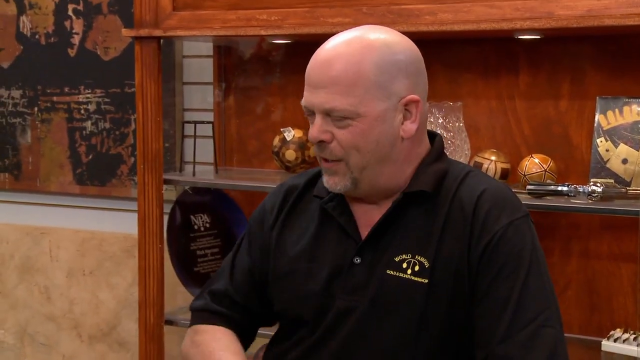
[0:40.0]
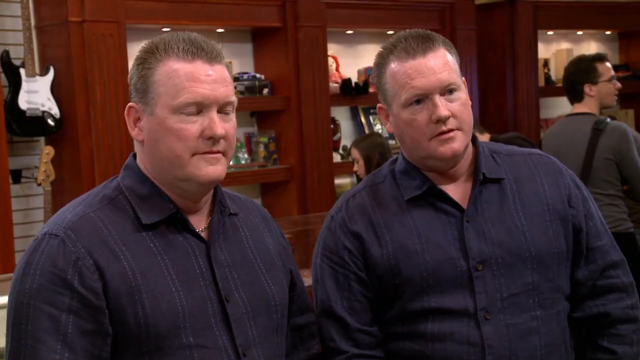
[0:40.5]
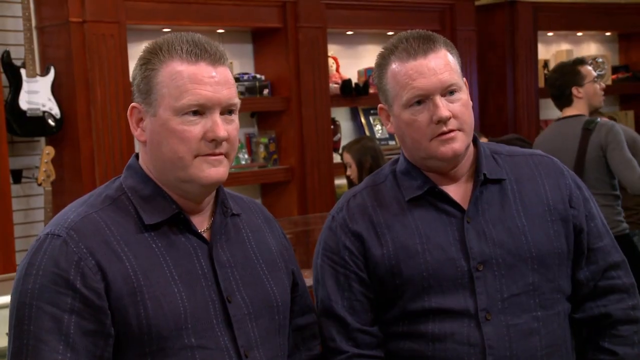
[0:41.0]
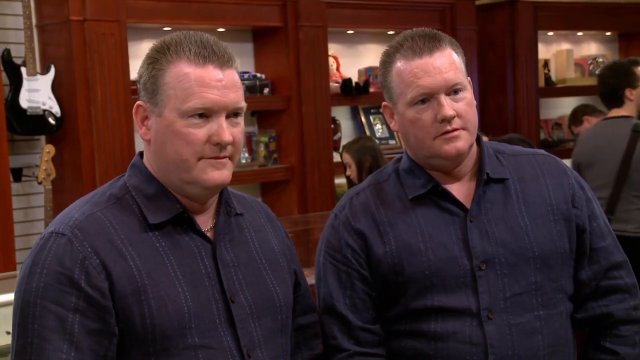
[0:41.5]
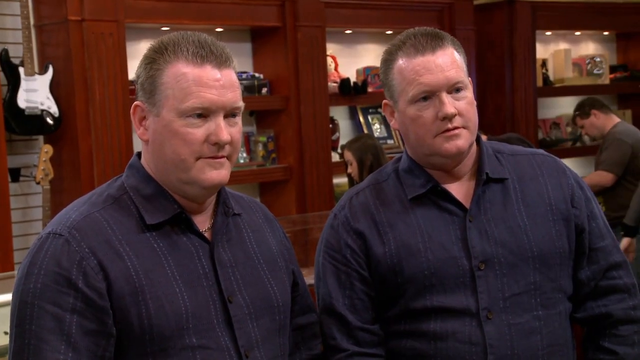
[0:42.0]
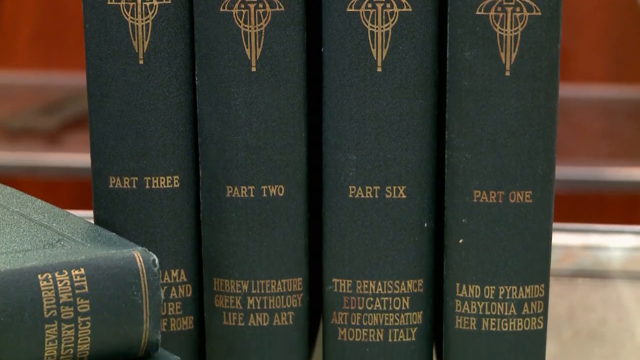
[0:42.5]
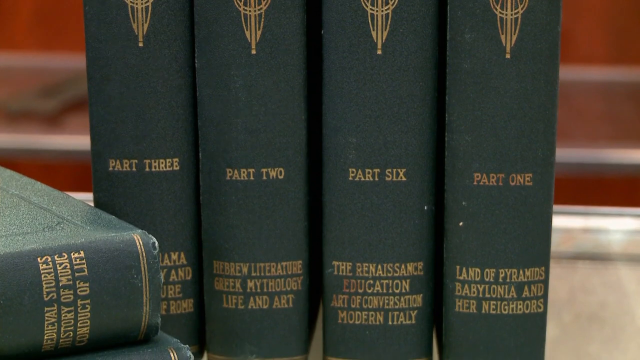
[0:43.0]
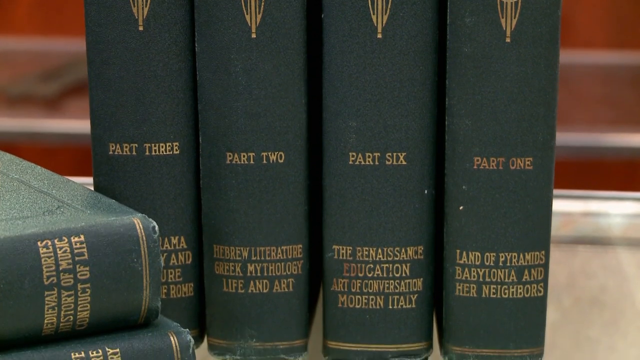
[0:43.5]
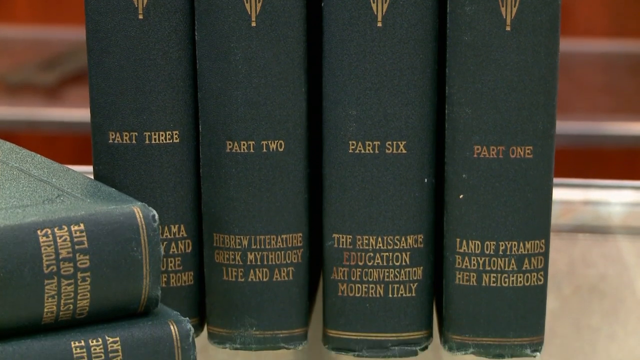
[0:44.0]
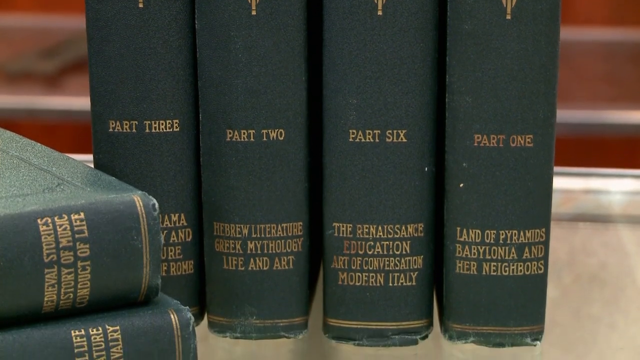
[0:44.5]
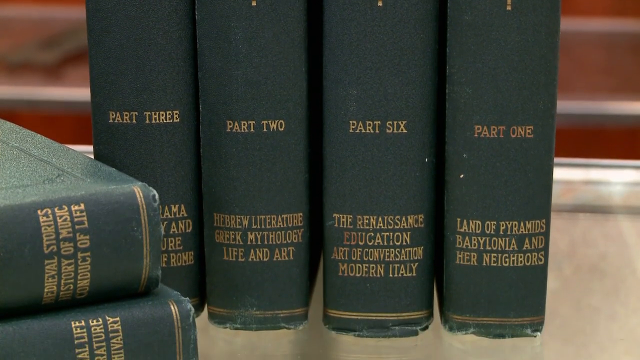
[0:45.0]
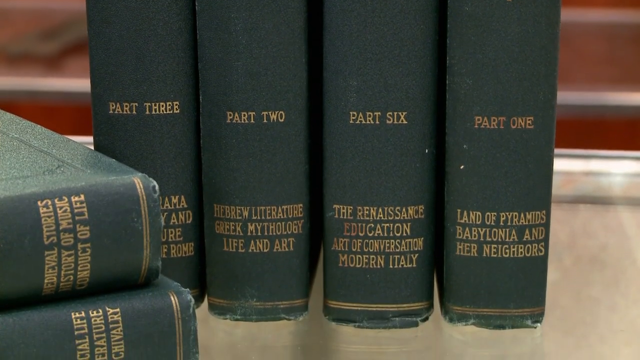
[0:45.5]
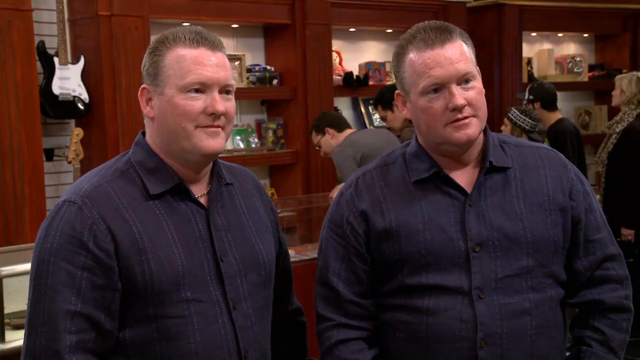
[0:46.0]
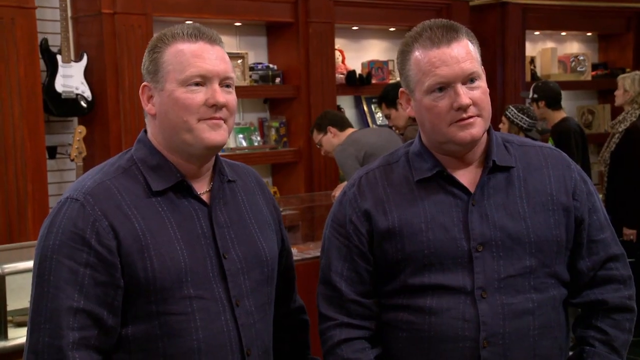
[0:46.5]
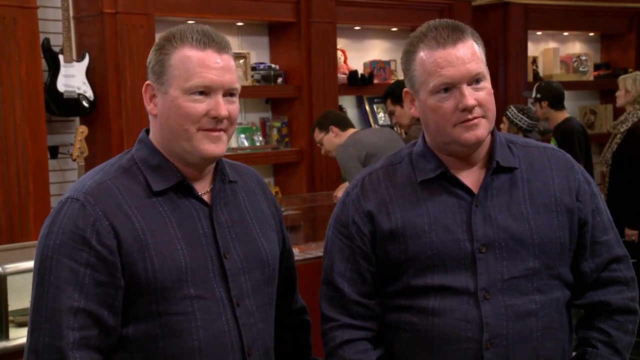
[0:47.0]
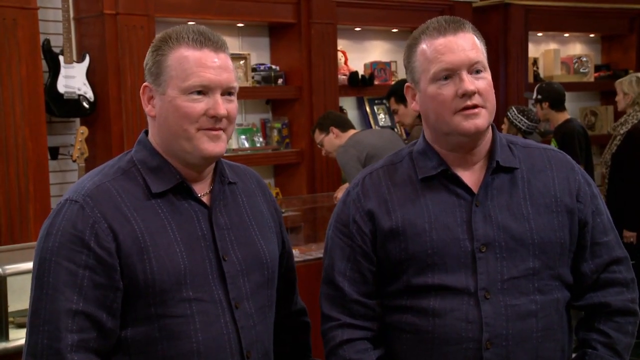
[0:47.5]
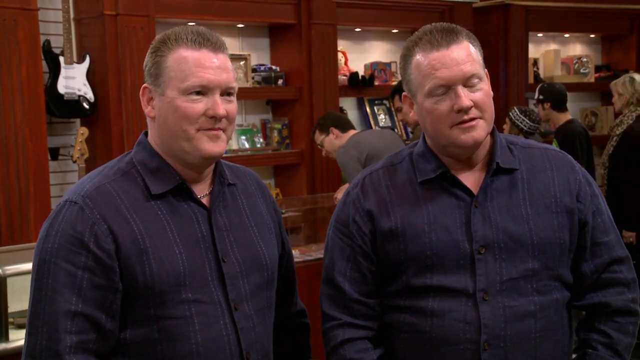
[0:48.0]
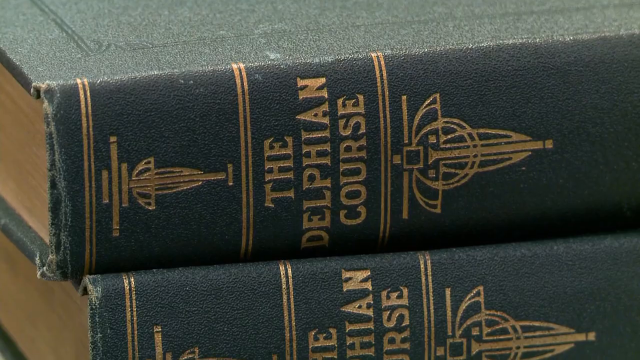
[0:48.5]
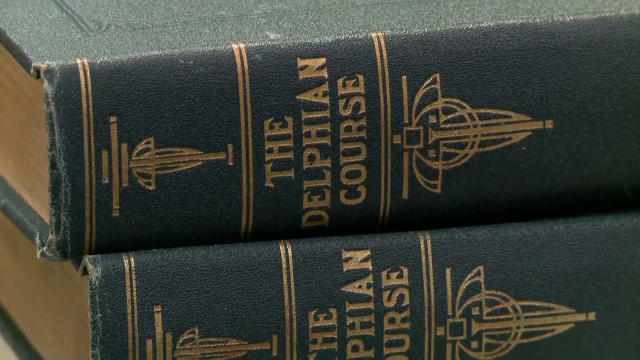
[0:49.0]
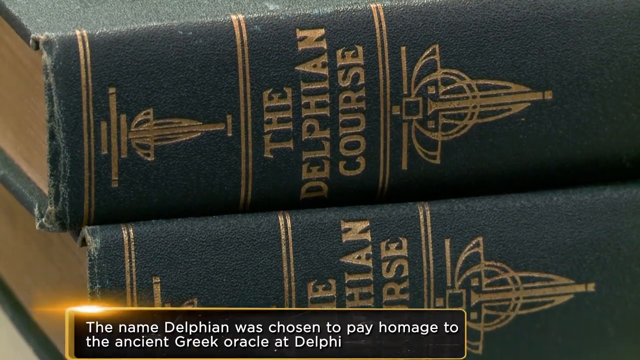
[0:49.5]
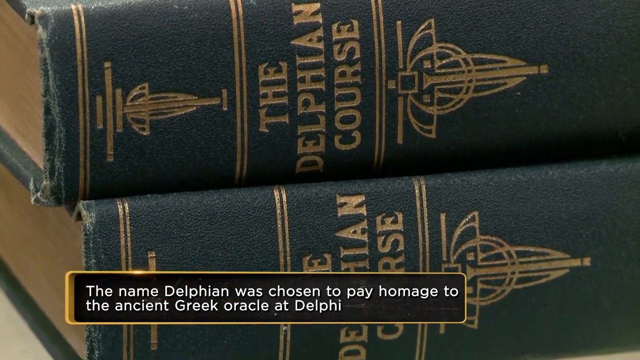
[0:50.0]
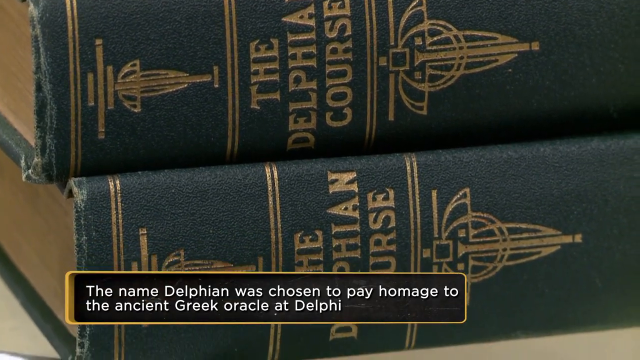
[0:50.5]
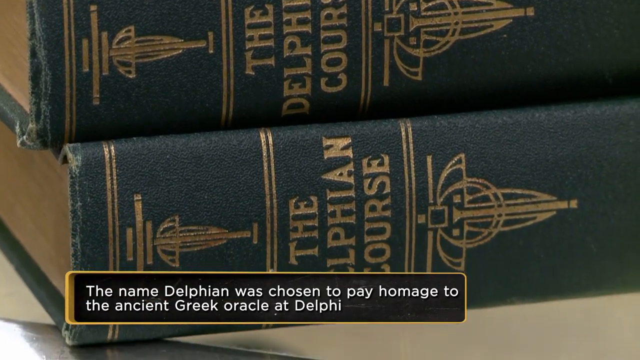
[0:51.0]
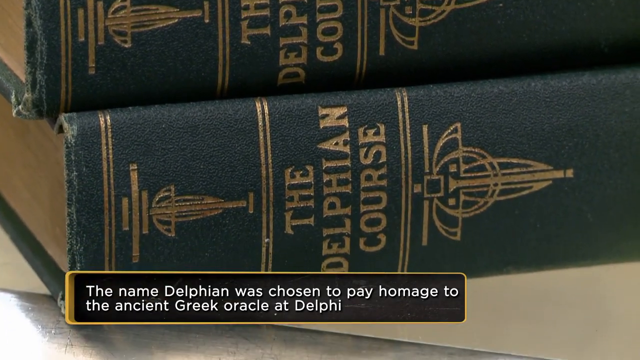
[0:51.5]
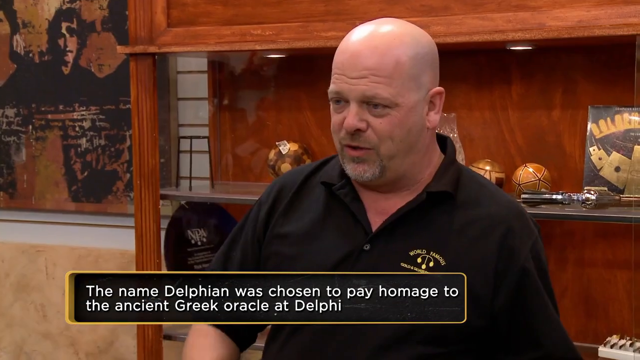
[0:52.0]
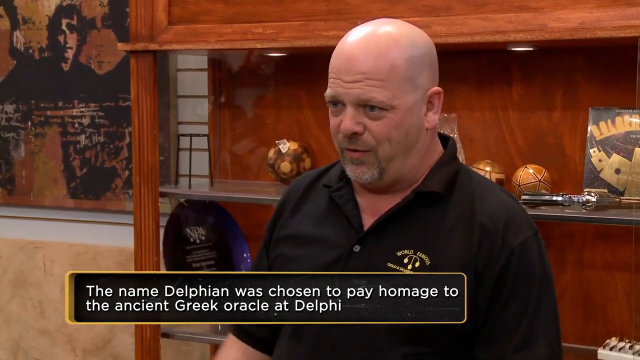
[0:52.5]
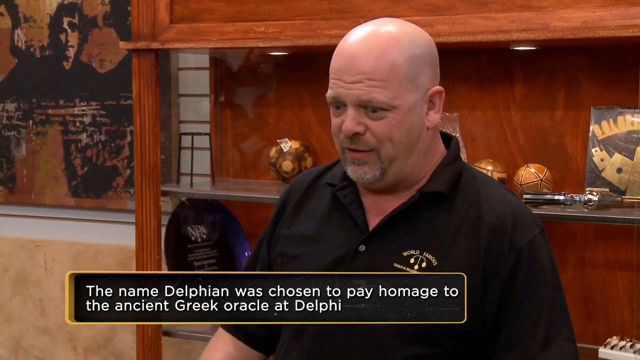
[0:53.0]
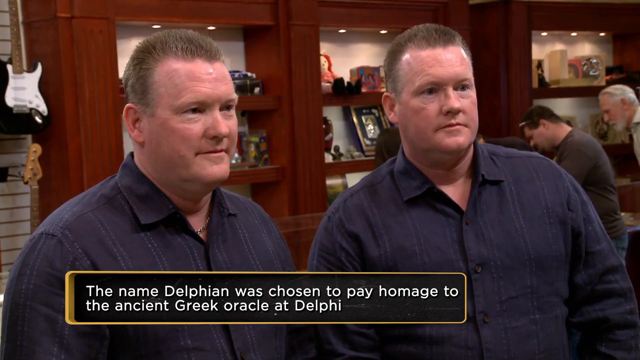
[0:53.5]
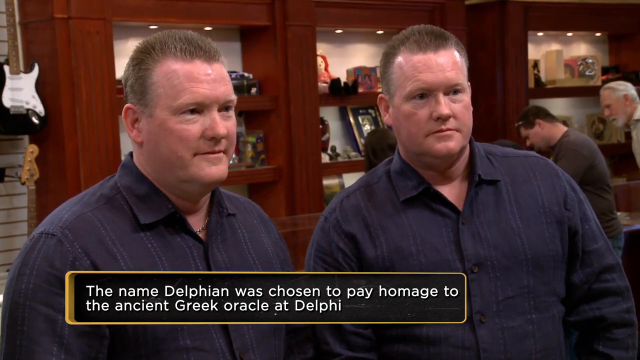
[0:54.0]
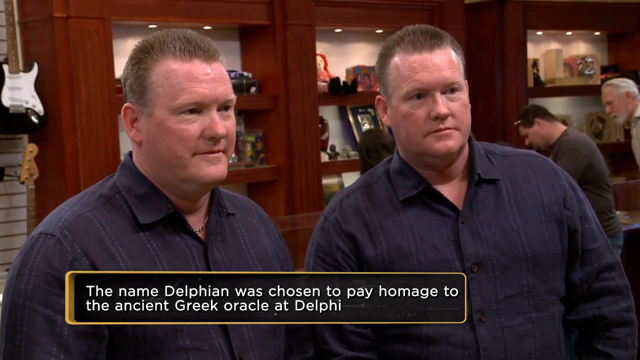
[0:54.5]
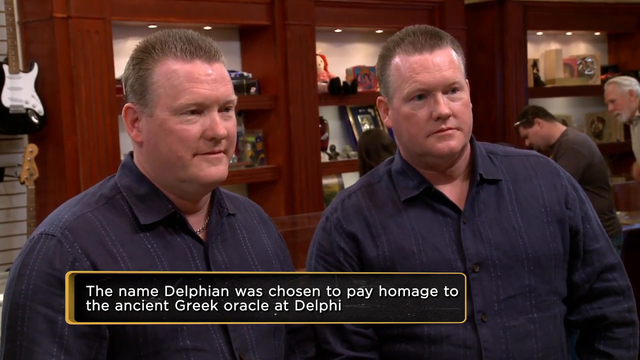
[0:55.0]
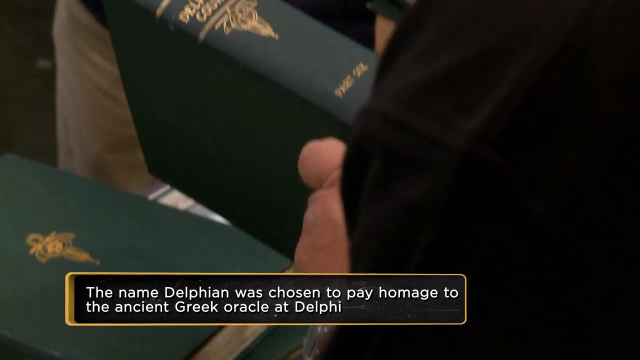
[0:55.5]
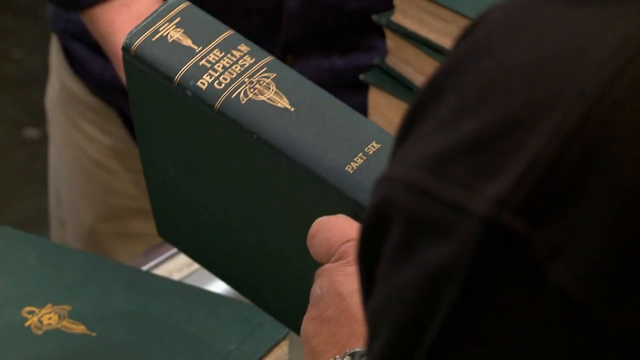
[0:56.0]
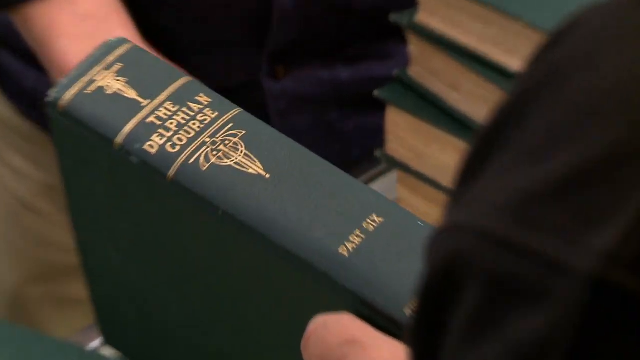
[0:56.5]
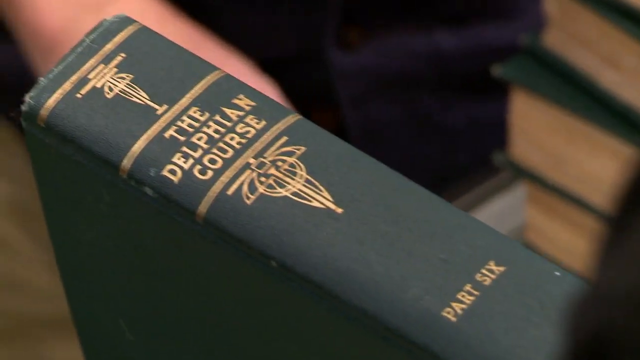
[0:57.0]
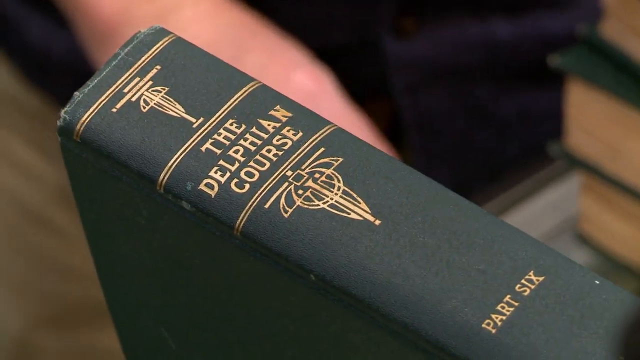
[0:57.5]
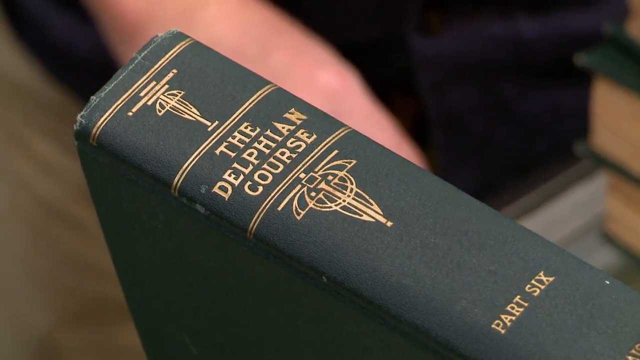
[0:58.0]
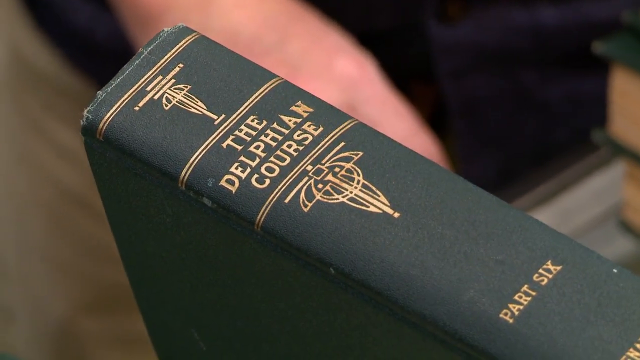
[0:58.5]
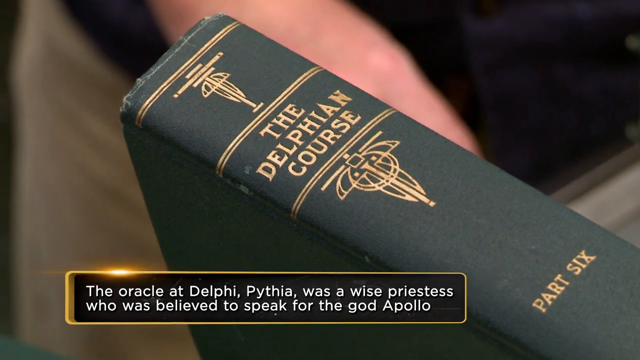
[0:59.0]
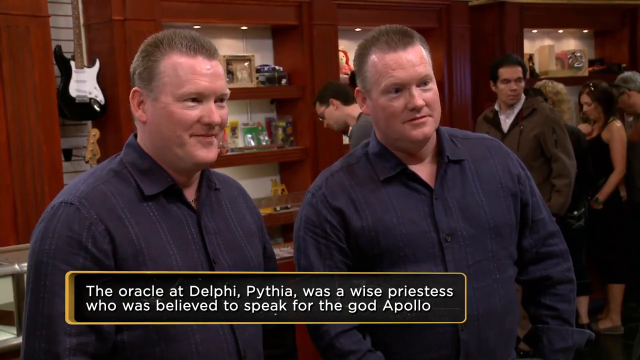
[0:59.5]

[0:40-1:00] The man behind the counter in the black short-sleeved shirt talks to Derek and Eric. On the shelves behind him are a gun, a few balls and a poster, apparently antique items; he appears to be the owner. A close-up shows the Delphian Course books, with spines reading part 2, part 3, part 2, part 6 and part 1, not in order, and titles including Renaissance education, art of conversation, modern Italy, land of pyramids, Hebrew literature, Greek mythology, and life and art. During the close-ups, text appears on screen: "the name Delphian was chosen to pay homage to the ancient Greek Oracle at Delphi". The two brothers and the man behind the counter then look at the books, and another piece of text appears, describing "the Oracle at Delphi" as a priestess who "was a wise priestess who was believed to speak for the God Apollo".